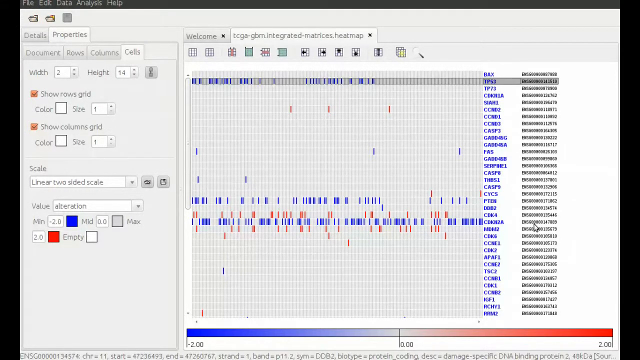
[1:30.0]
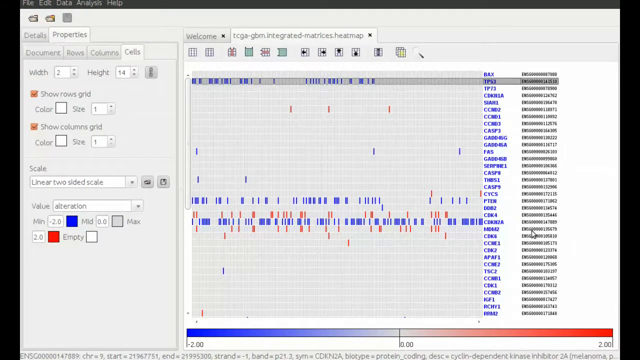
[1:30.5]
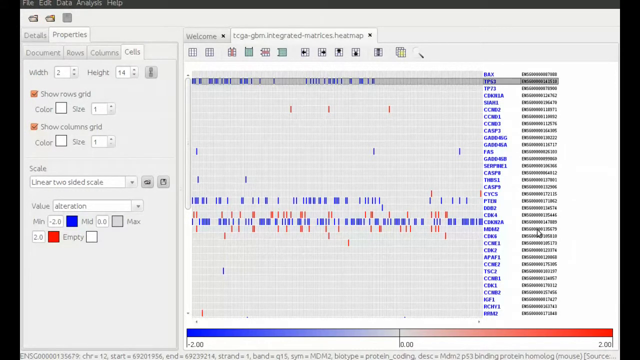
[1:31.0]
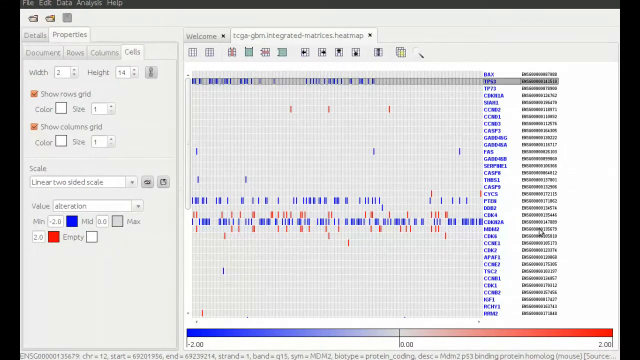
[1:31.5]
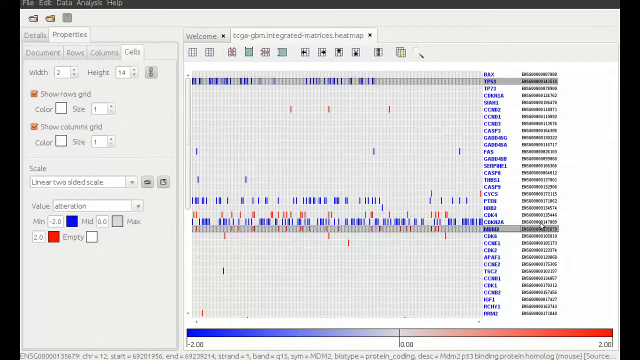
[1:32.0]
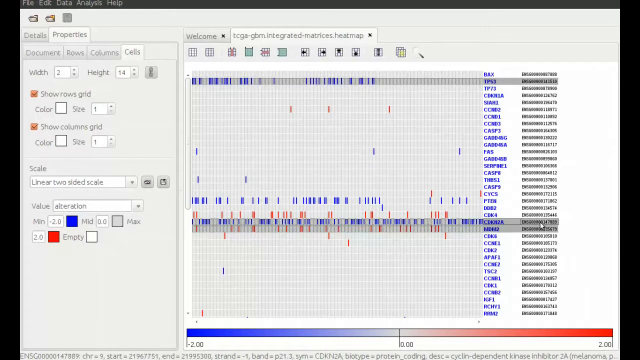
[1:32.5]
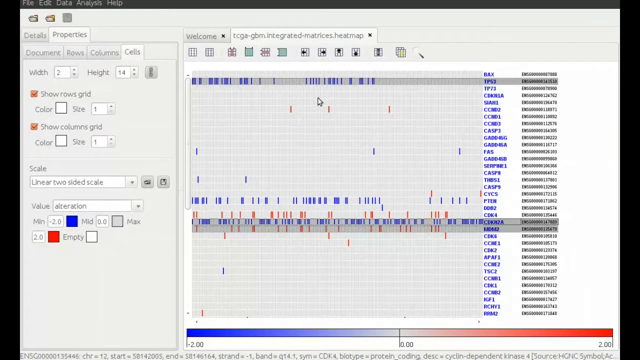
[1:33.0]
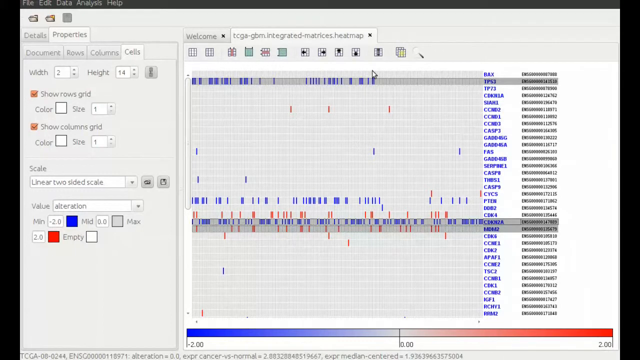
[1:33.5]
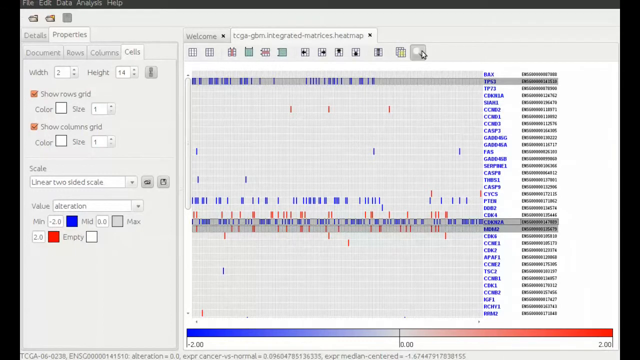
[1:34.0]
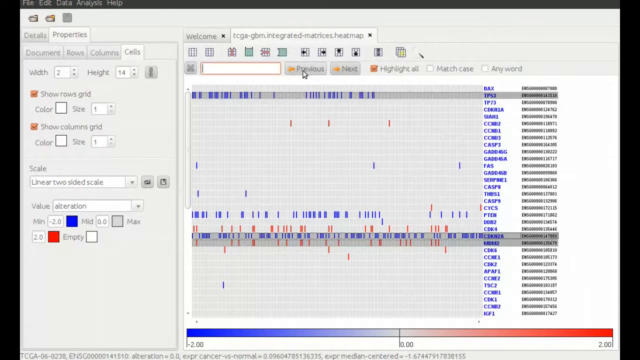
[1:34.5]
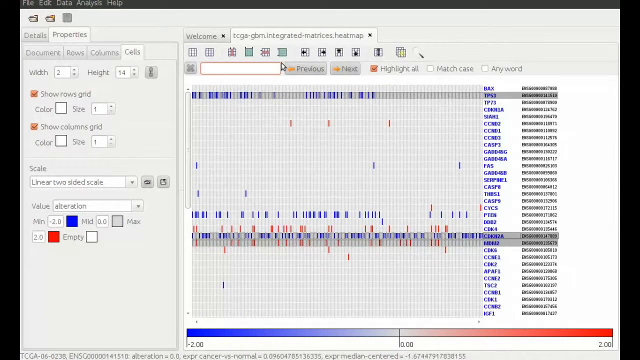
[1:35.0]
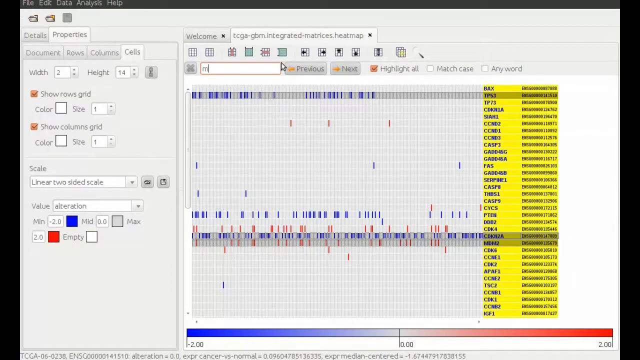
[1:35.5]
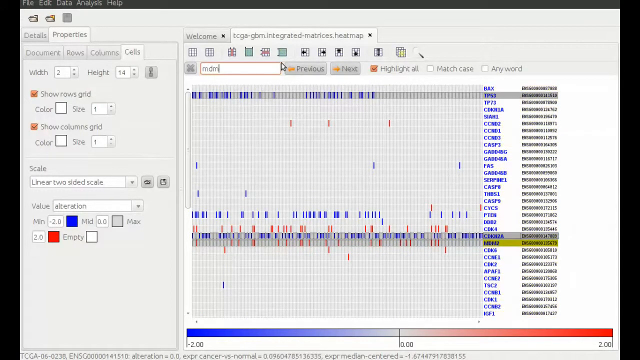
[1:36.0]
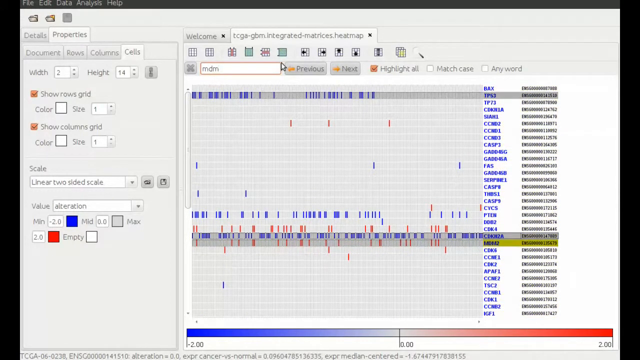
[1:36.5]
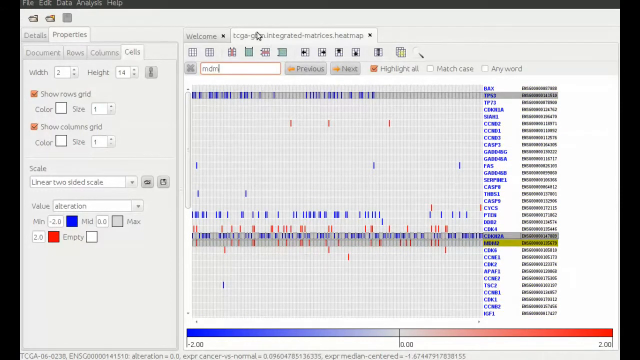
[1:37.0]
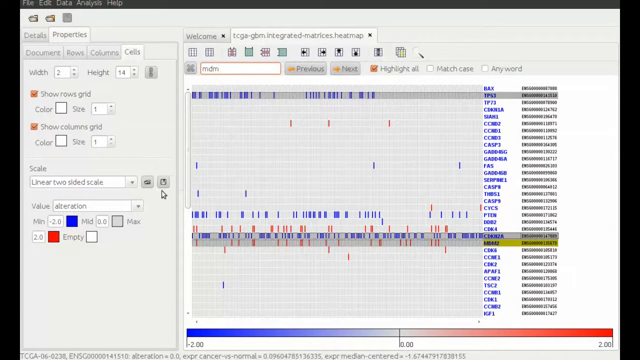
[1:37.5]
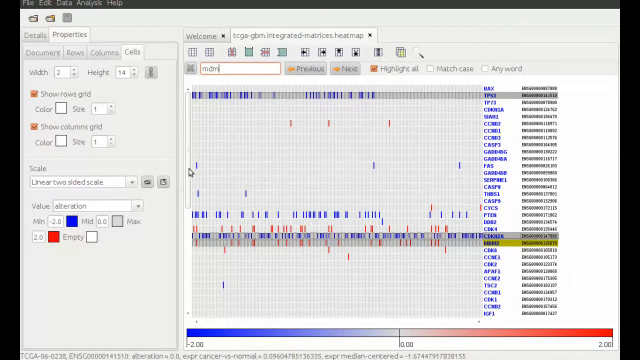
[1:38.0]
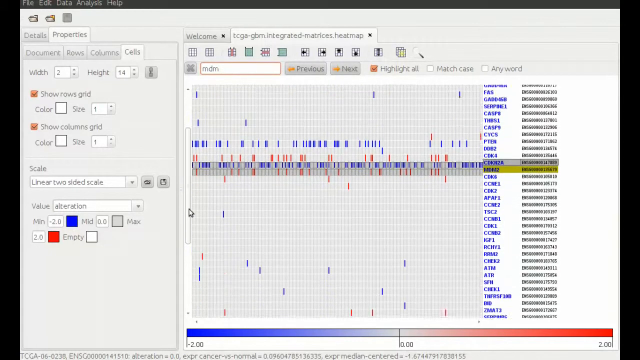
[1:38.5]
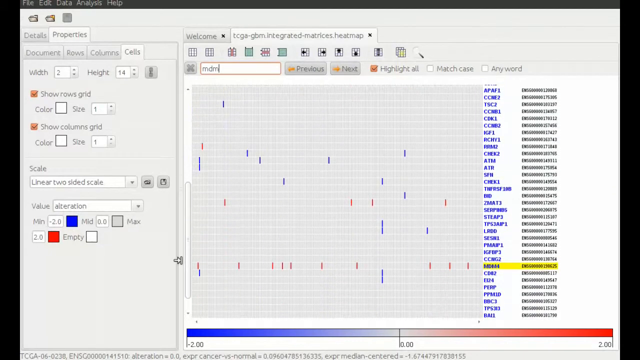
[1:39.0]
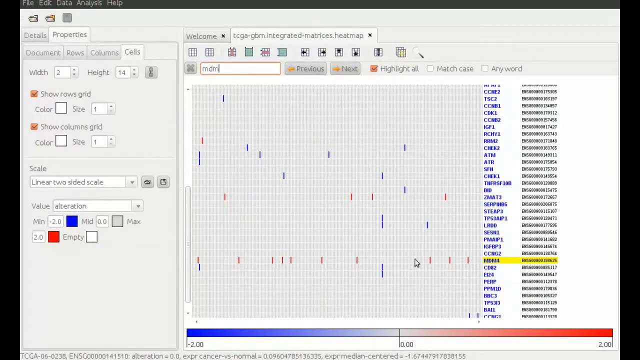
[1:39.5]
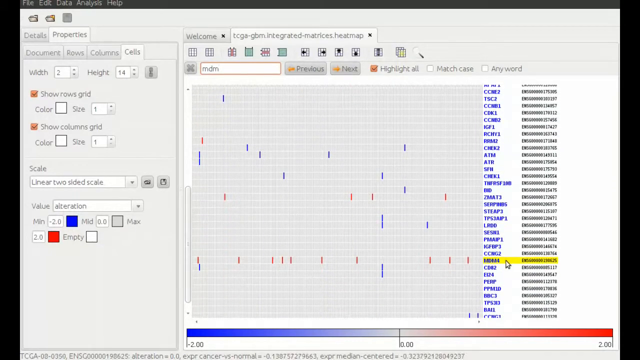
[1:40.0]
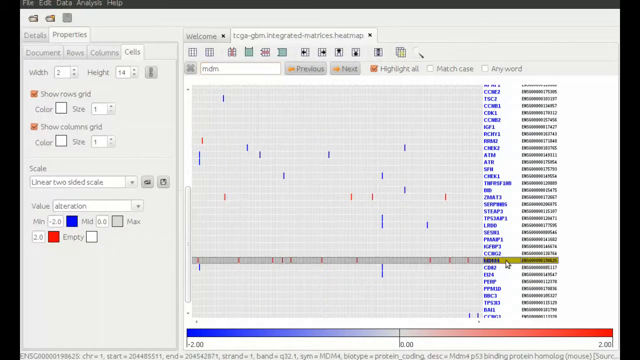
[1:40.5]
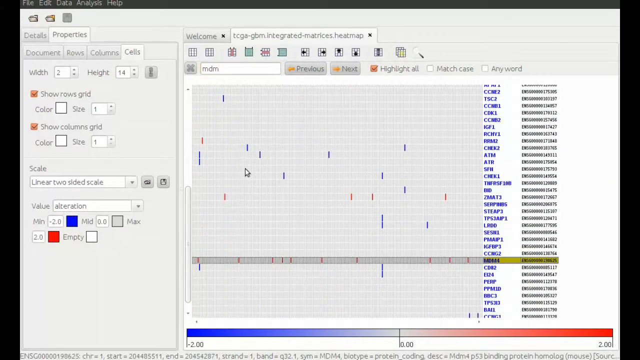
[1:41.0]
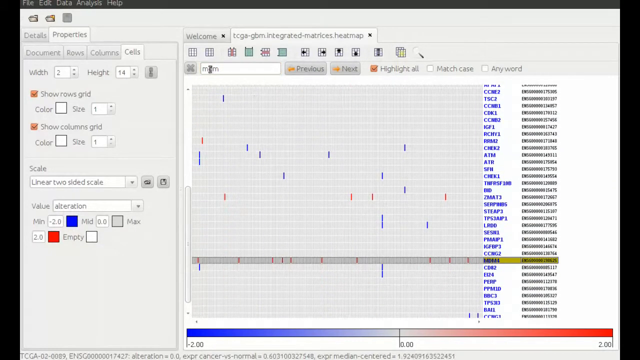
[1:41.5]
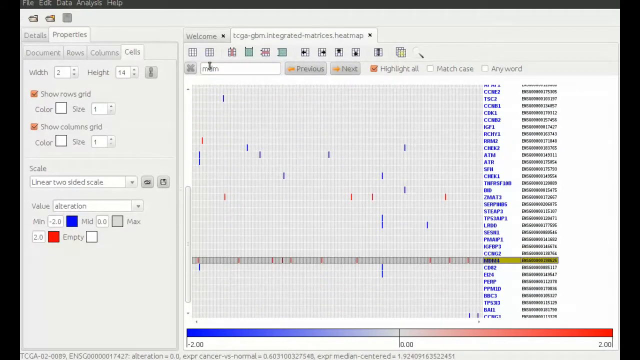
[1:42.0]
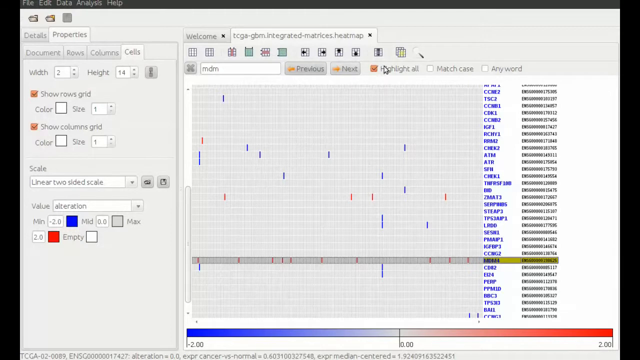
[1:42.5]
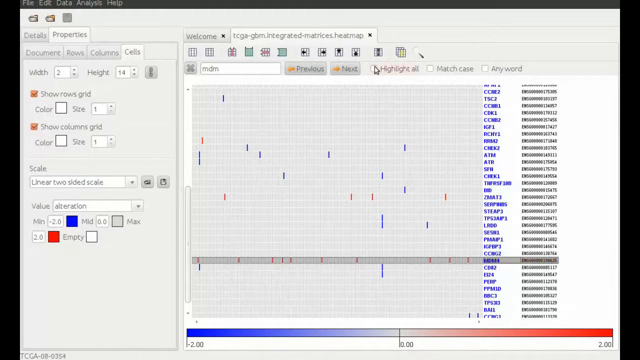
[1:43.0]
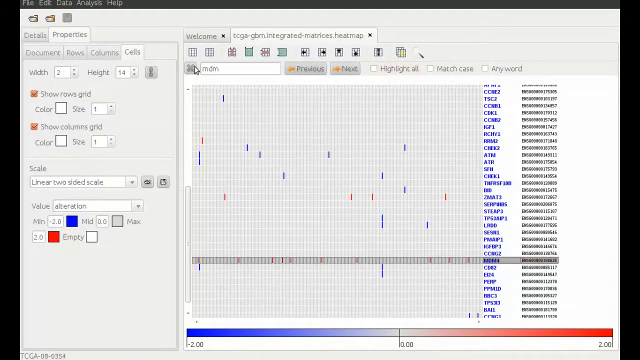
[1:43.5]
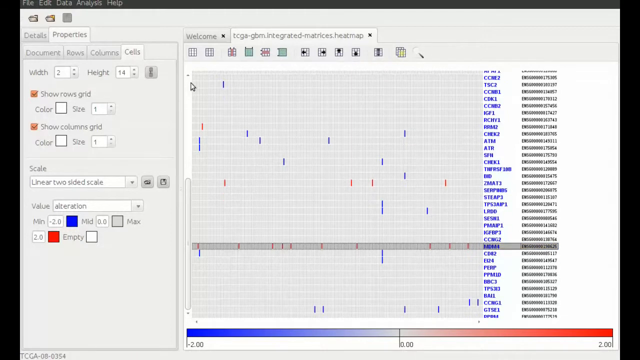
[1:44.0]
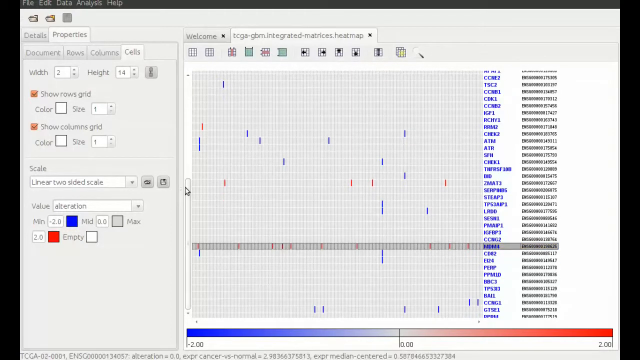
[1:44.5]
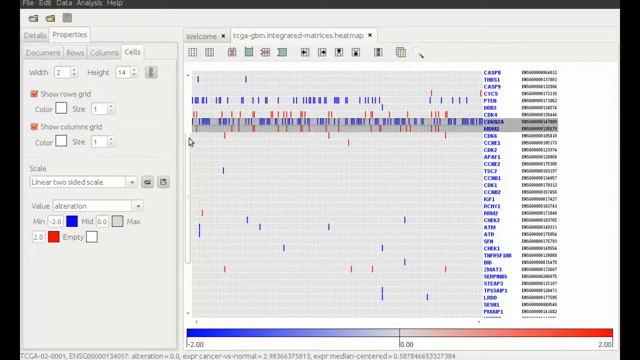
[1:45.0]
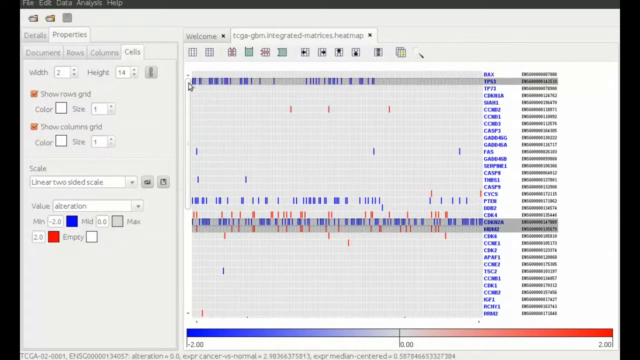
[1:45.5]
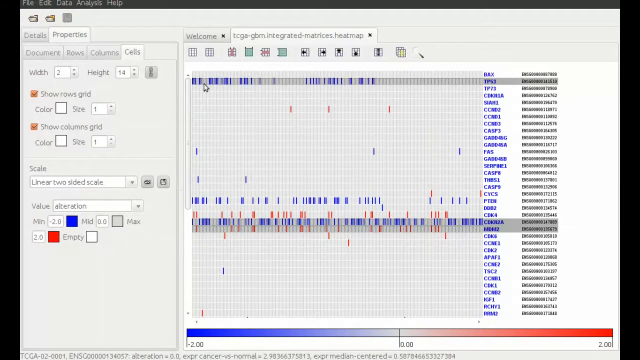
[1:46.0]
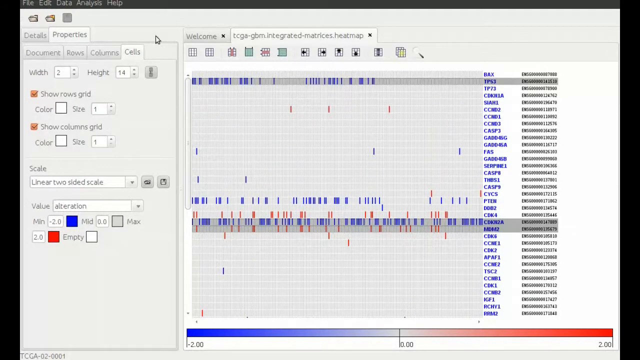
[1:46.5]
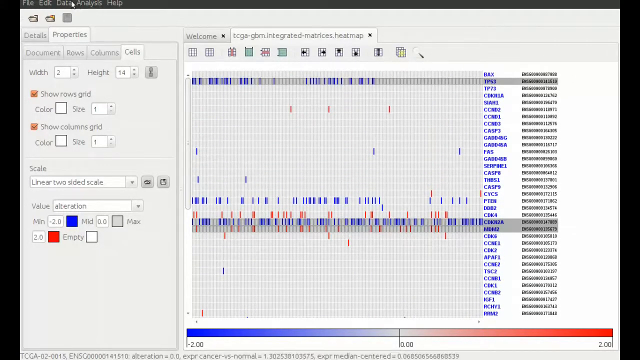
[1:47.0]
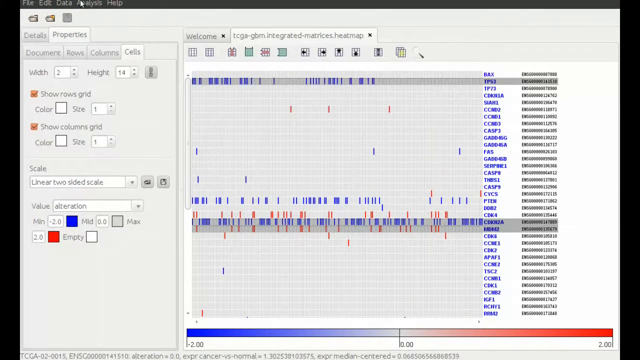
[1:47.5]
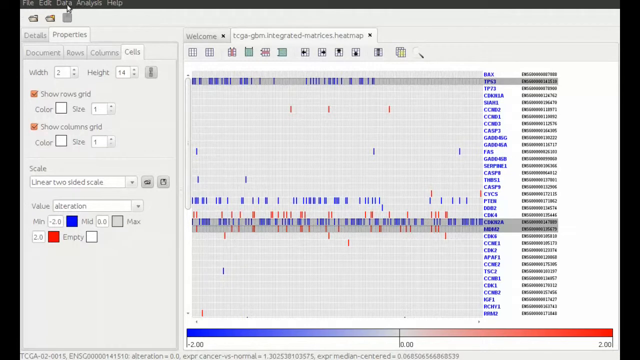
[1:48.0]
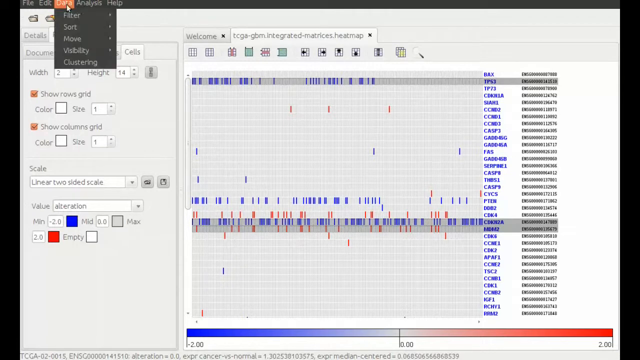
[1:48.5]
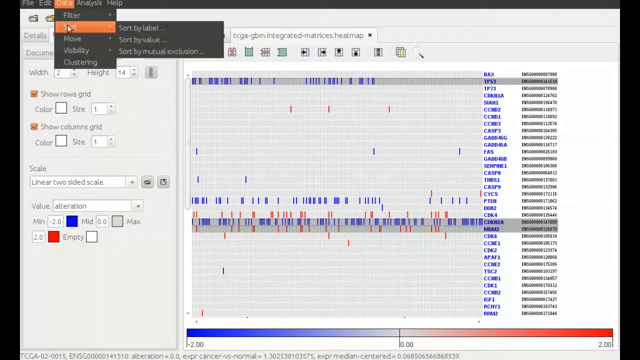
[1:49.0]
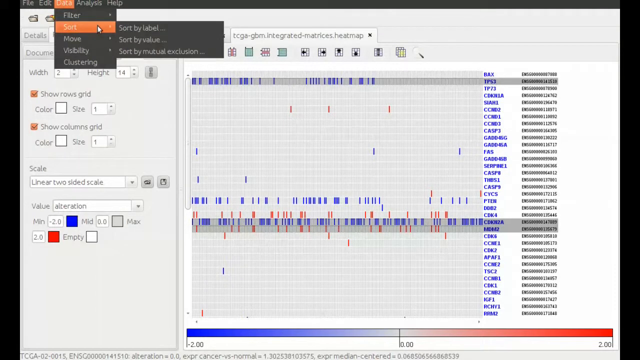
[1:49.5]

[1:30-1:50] The user selects the label TP53, the second label on the right side, which shows a lot of blue alterations on the left side of the chart. They move down the chart and select the MDM2 label and then the label right above it, CDKN2A, matching labels the user highlighted on the diagram in the browser. The user goes up to the toolbar, clicks the search icon, a magnifying glass, and a search box pops up in which they type "MDM". They scroll down to MDM4, which is now highlighted in yellow, and select it to go along with the other three selected labels. They then go back to the top menu, select sort in the data drop-down menu, and another submenu pops up.